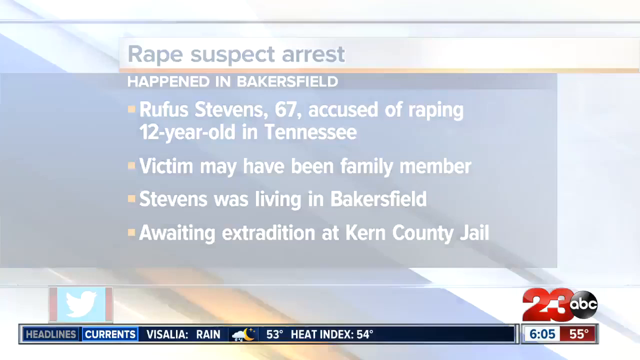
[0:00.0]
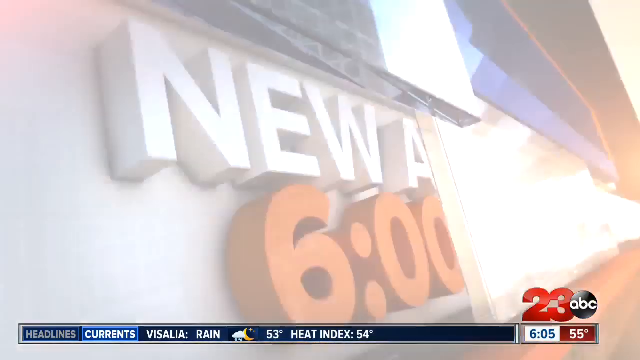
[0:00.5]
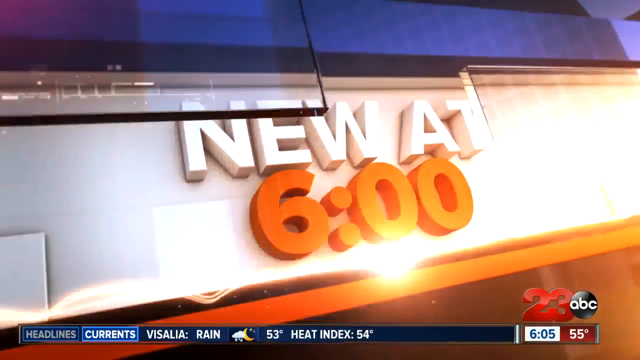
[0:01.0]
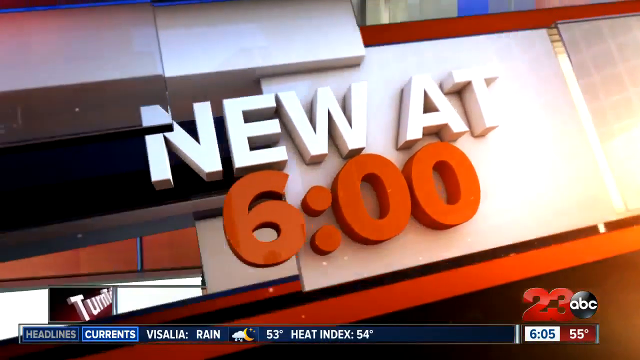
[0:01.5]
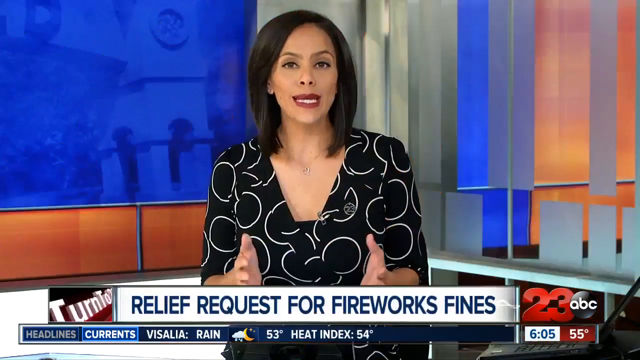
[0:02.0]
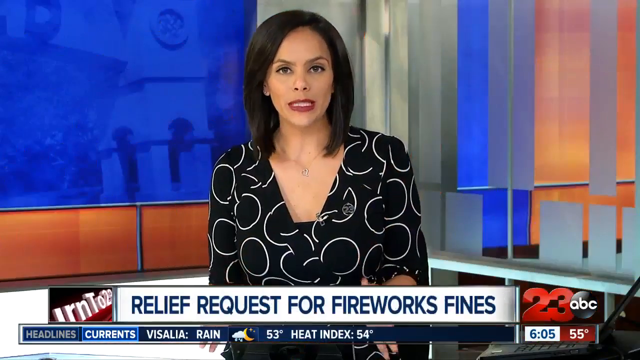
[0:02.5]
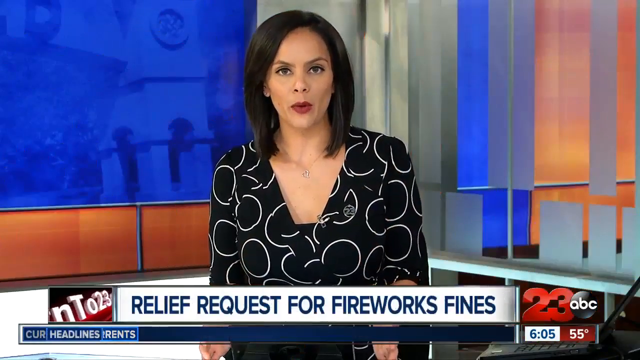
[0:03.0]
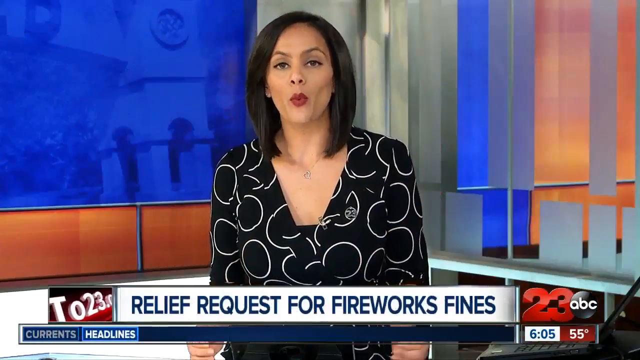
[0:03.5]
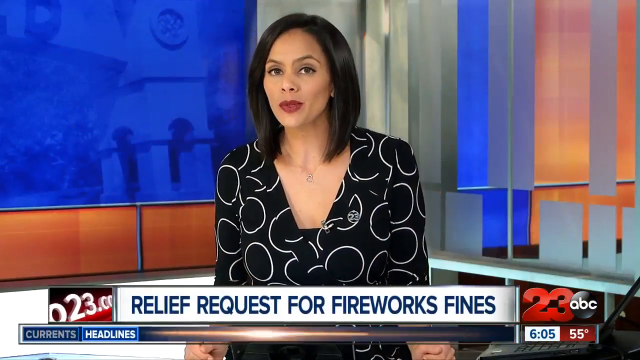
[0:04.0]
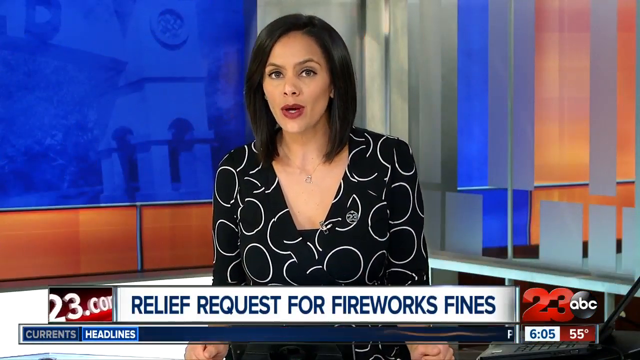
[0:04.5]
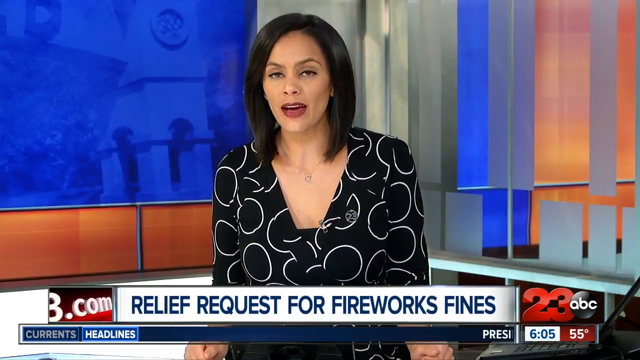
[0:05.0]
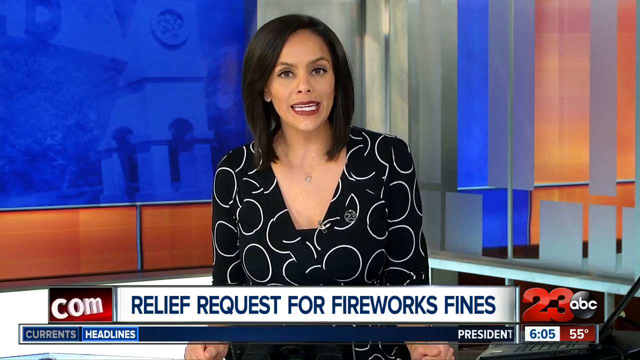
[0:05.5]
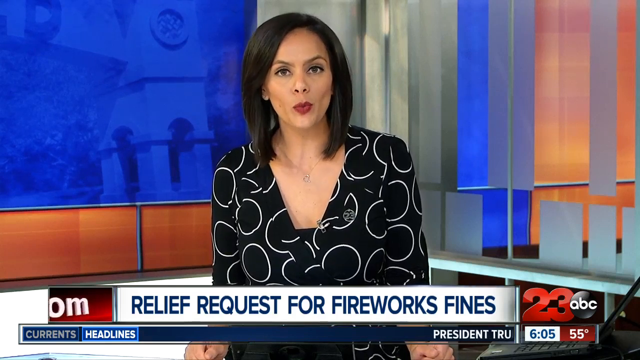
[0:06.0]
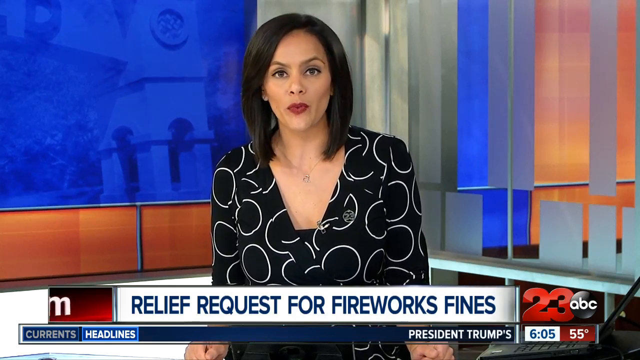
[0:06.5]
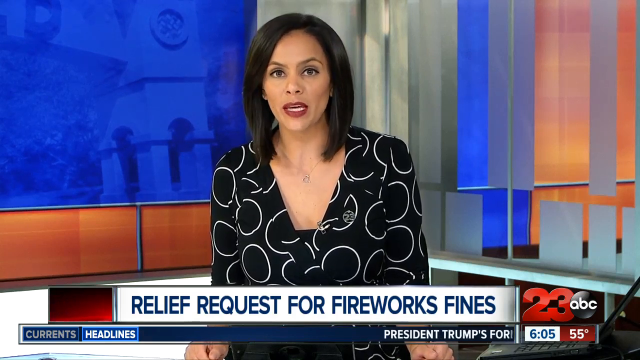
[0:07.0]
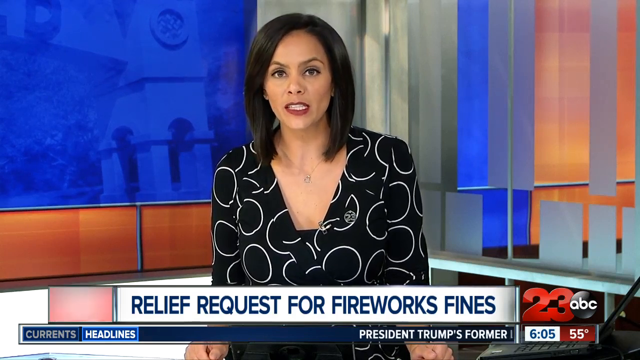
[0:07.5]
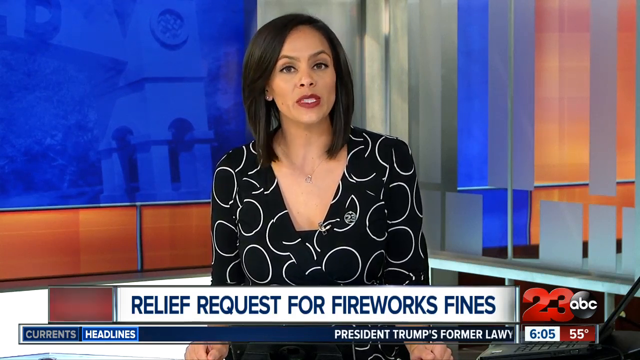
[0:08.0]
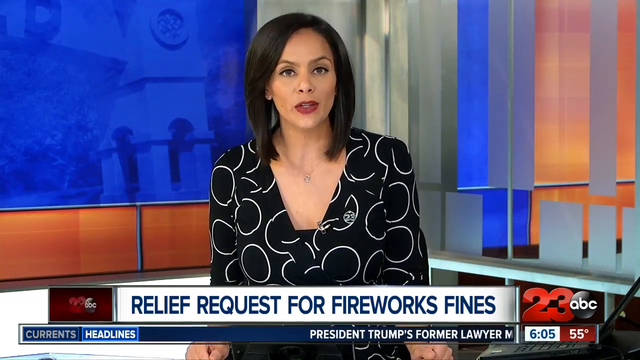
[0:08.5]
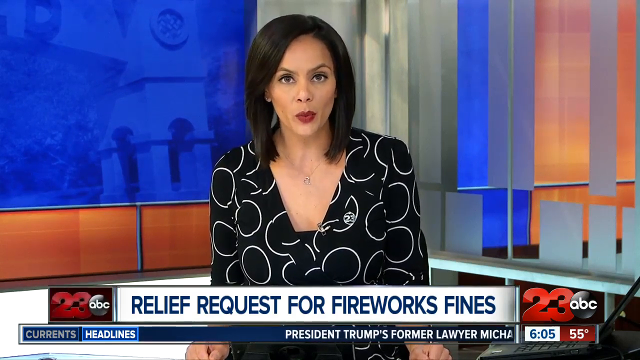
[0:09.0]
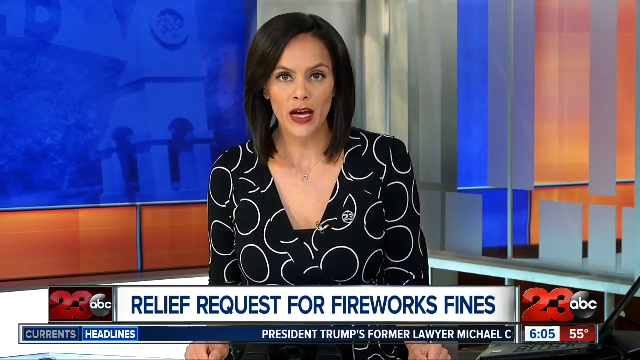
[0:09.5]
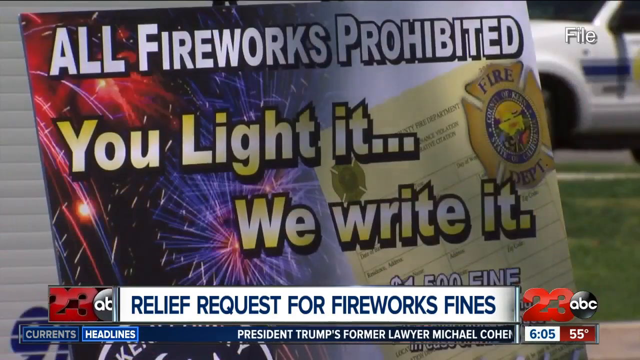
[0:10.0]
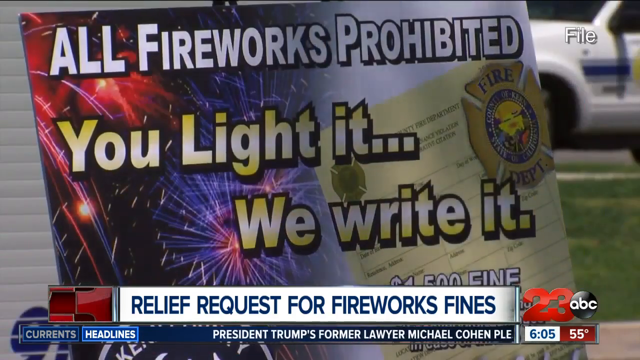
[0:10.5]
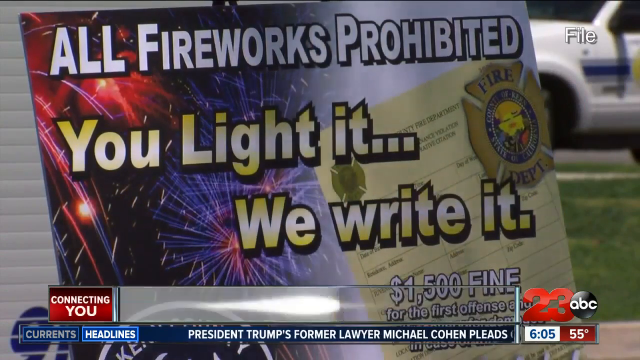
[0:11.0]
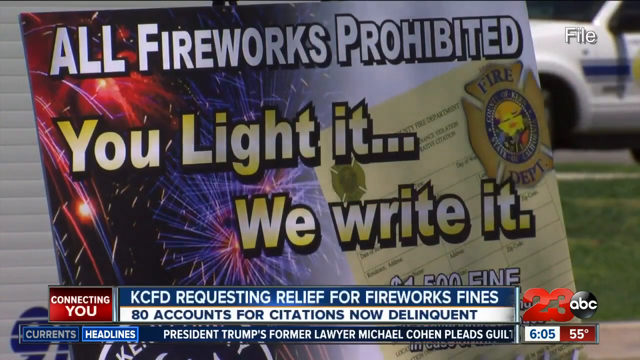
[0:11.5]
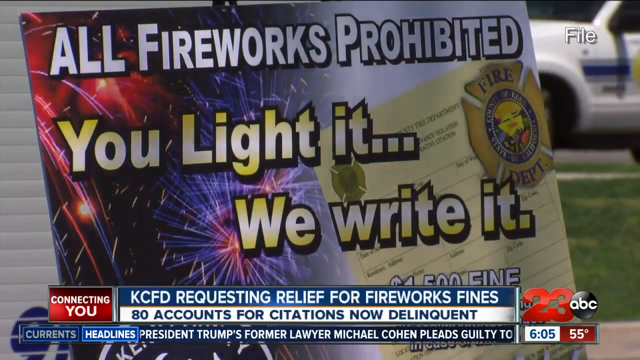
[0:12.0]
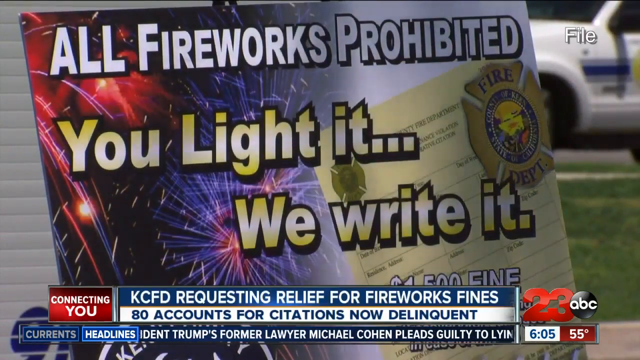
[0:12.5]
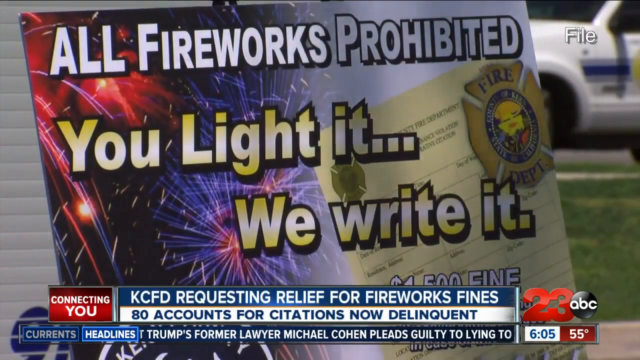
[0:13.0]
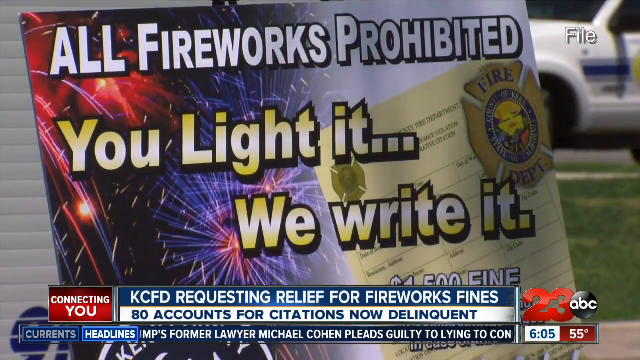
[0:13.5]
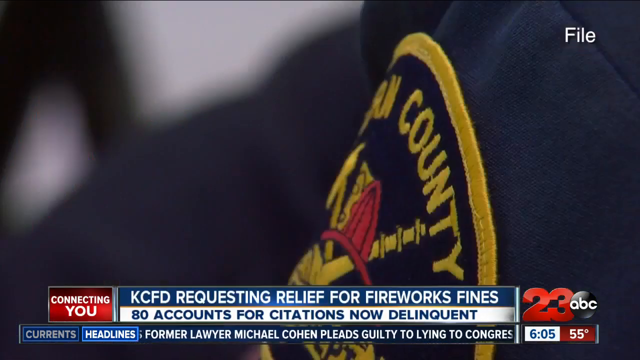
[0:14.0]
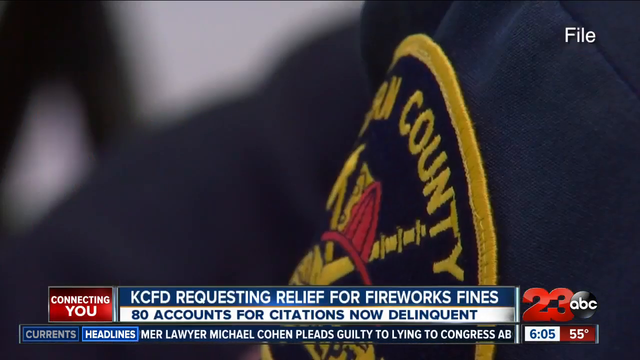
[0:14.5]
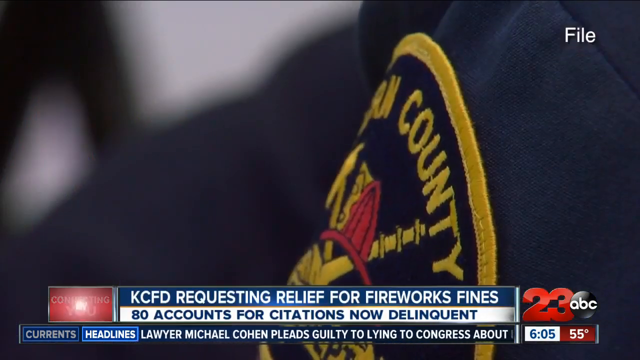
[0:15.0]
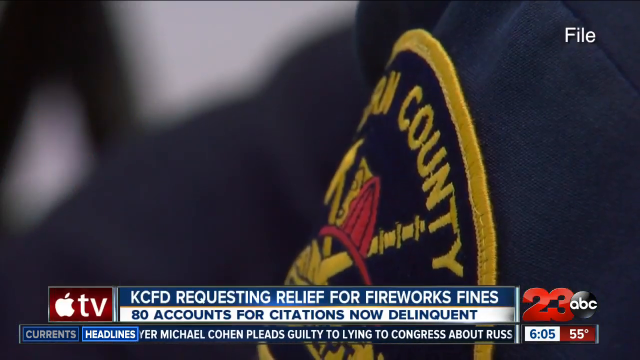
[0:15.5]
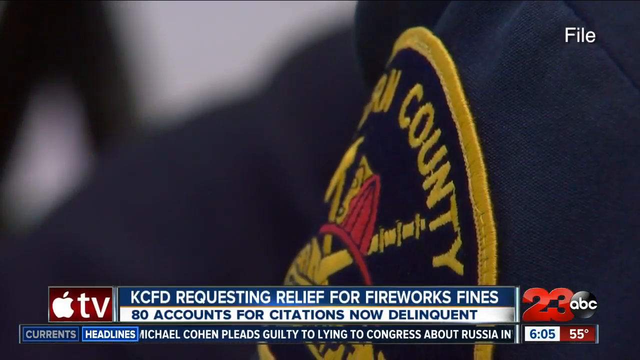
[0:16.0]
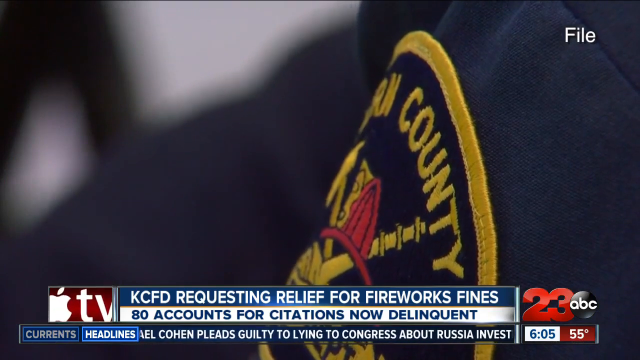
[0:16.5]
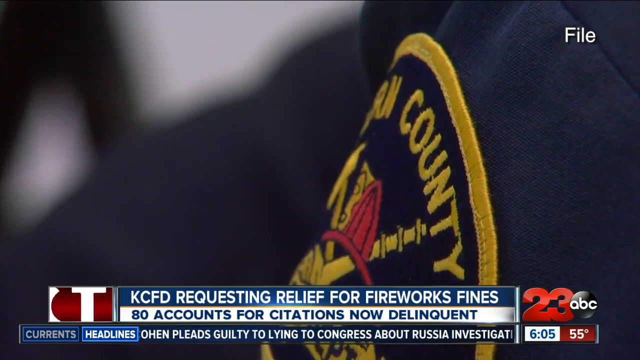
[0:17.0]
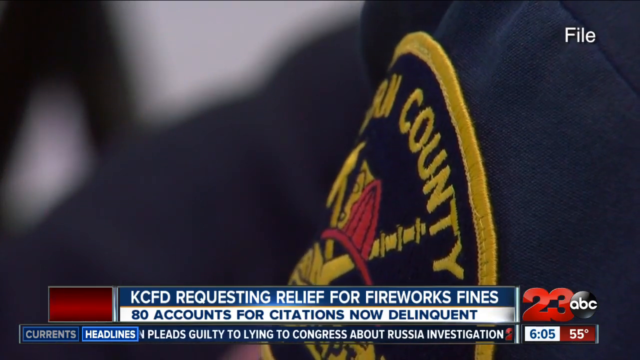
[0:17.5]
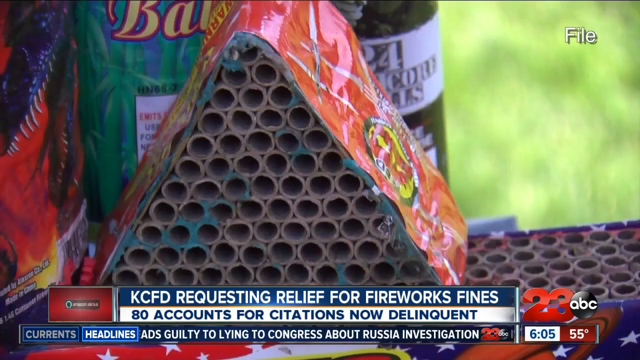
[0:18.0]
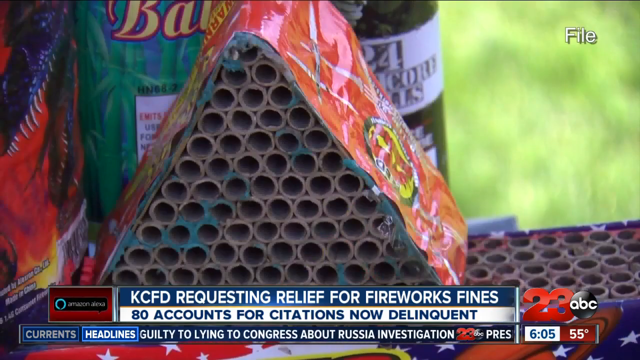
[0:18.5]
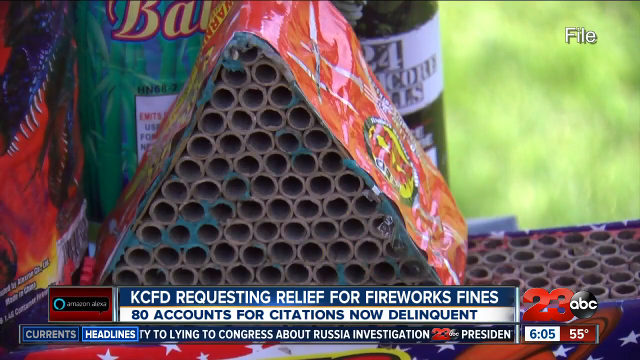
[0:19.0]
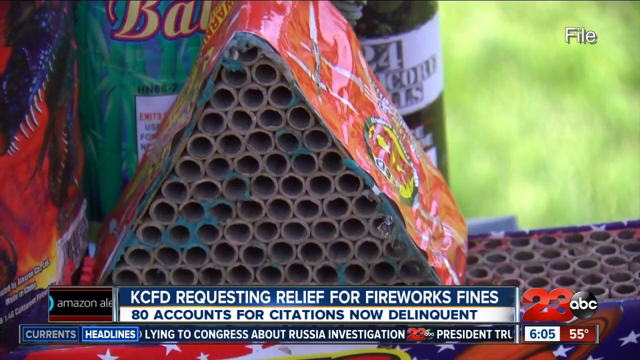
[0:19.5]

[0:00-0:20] A news broadcast from Bakersfield, California, News 23 ABC news at 6, covers relief requests for firework fines and something that happened in Bakersfield. A woman is speaking.